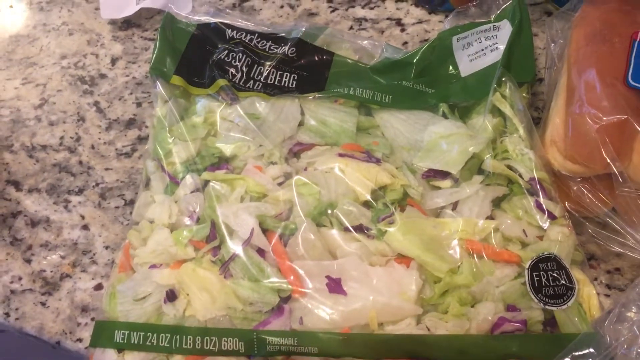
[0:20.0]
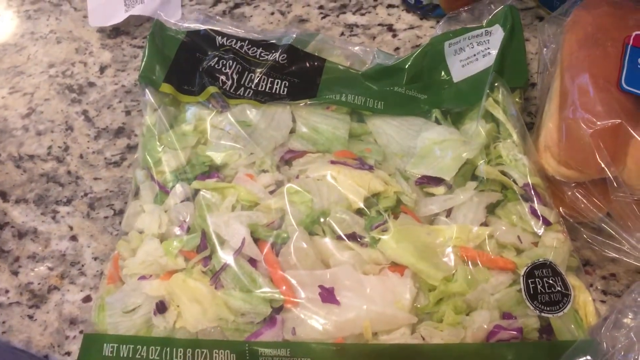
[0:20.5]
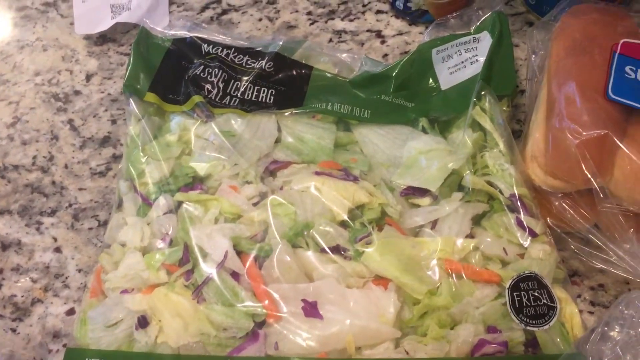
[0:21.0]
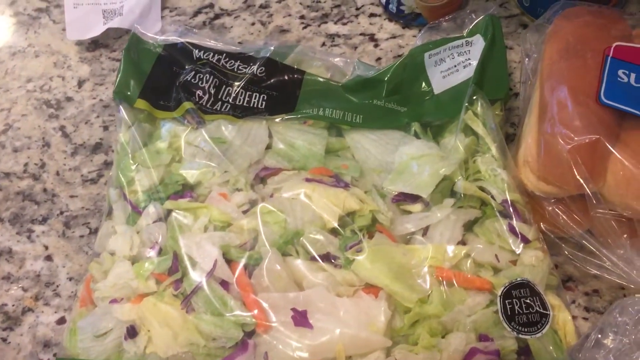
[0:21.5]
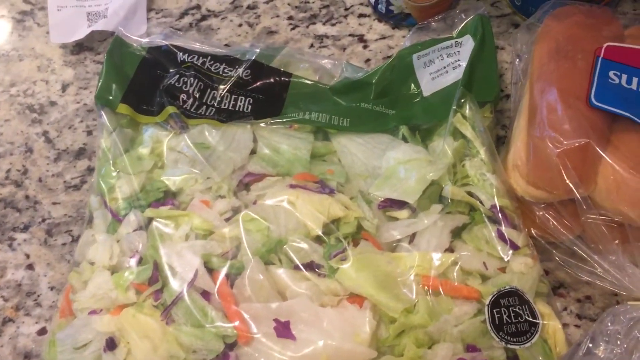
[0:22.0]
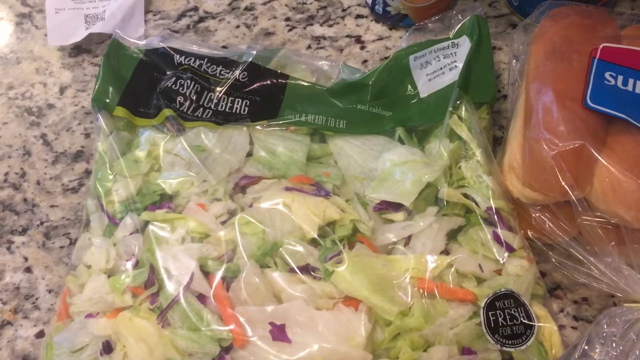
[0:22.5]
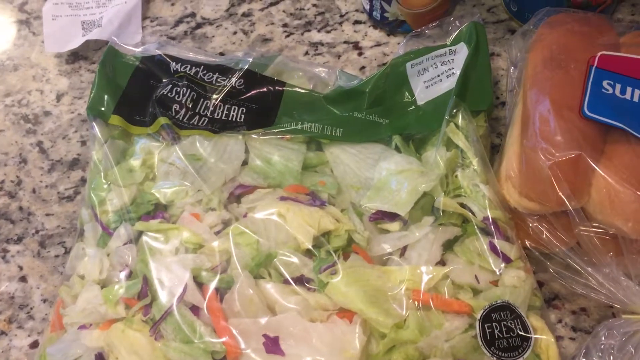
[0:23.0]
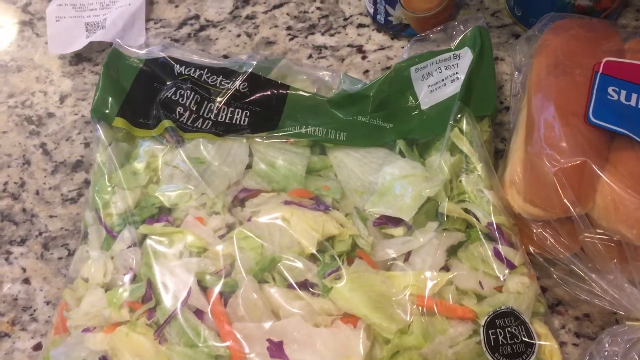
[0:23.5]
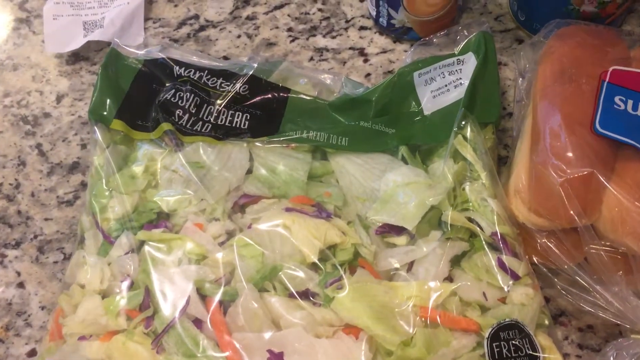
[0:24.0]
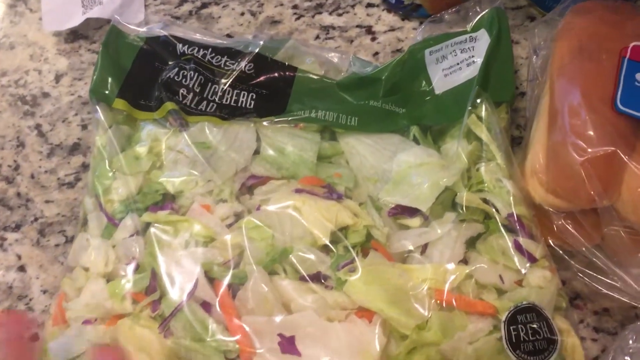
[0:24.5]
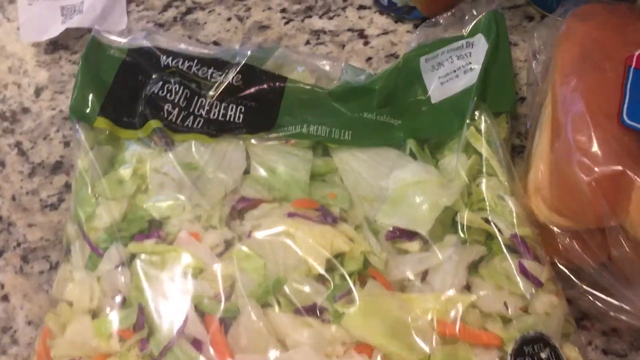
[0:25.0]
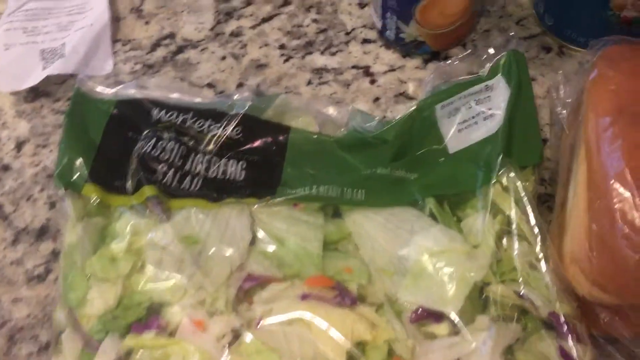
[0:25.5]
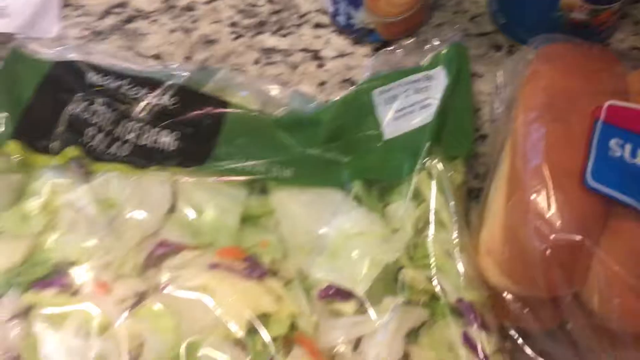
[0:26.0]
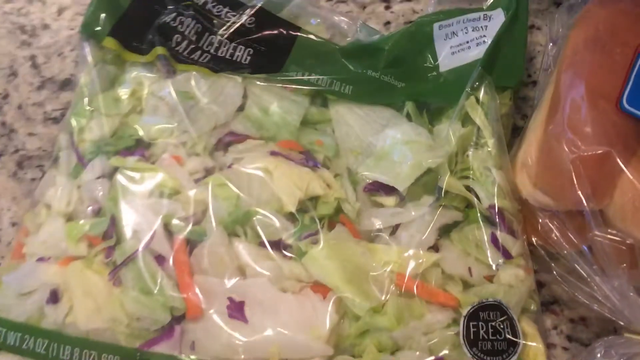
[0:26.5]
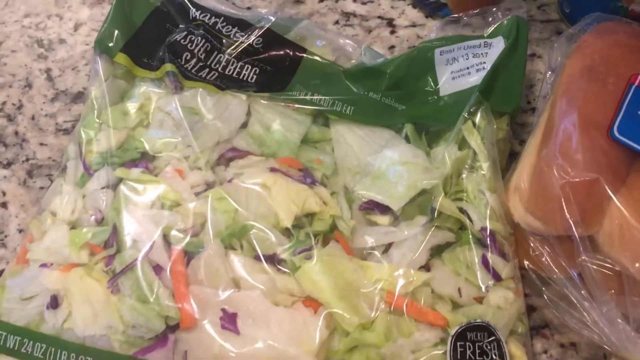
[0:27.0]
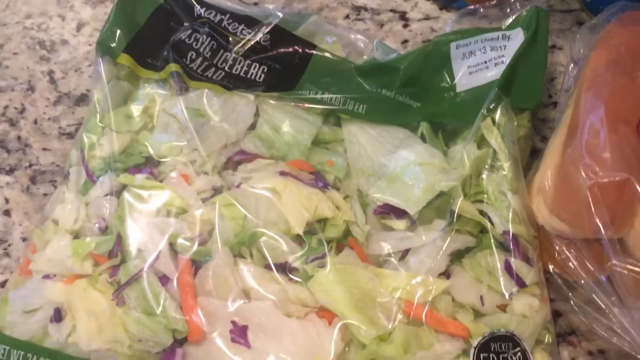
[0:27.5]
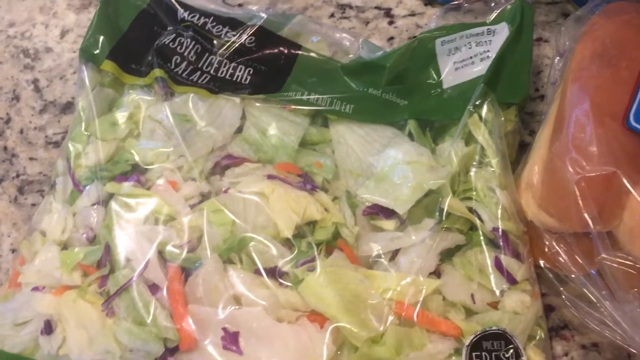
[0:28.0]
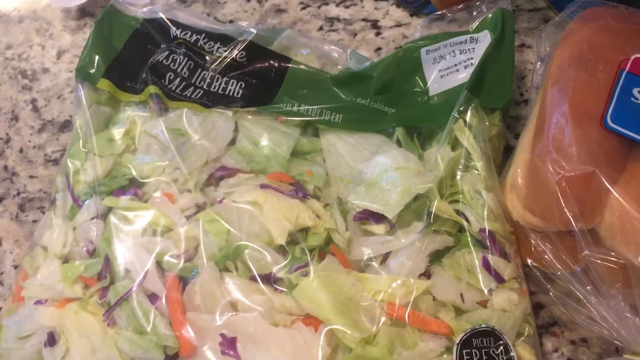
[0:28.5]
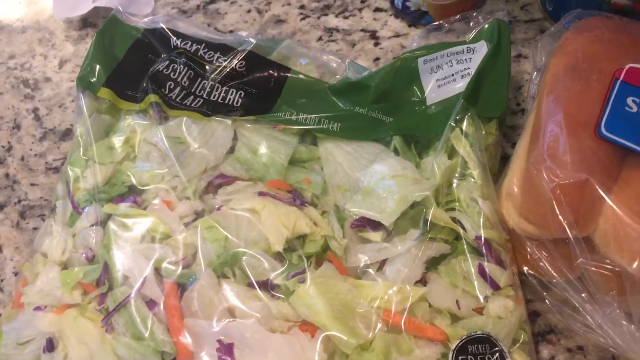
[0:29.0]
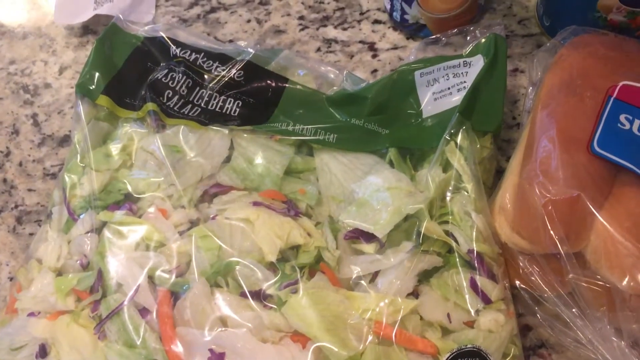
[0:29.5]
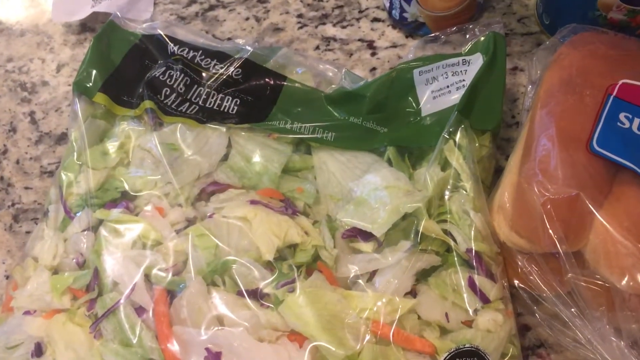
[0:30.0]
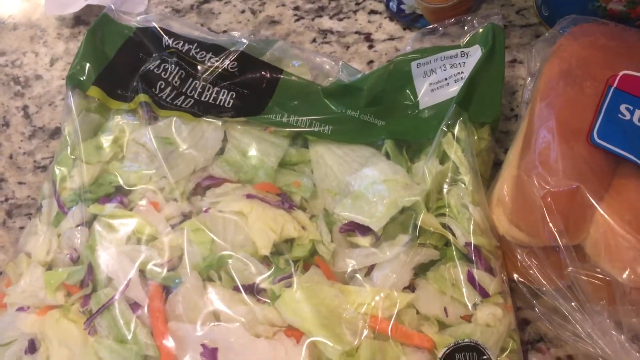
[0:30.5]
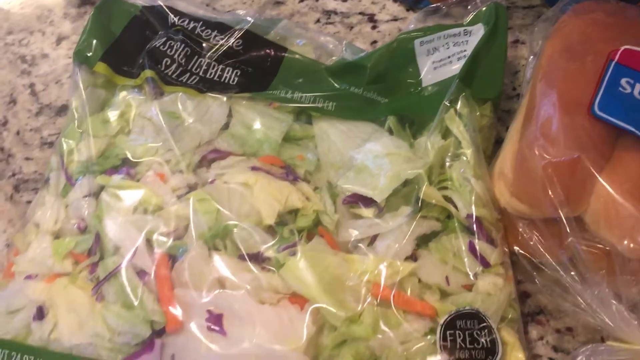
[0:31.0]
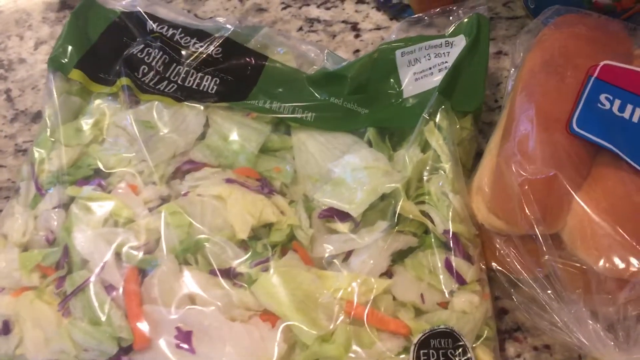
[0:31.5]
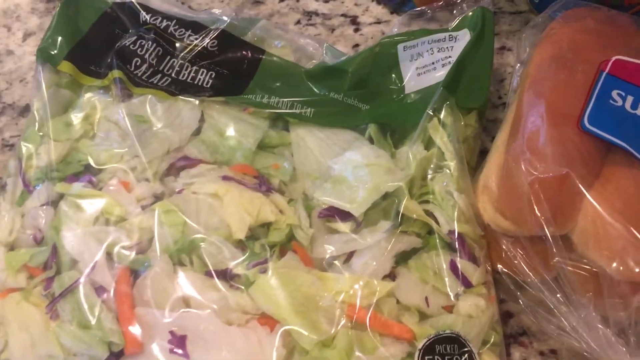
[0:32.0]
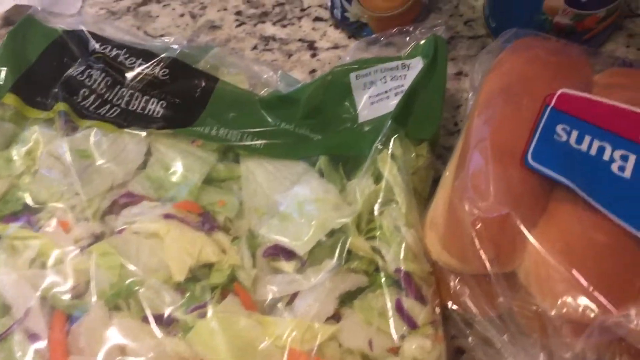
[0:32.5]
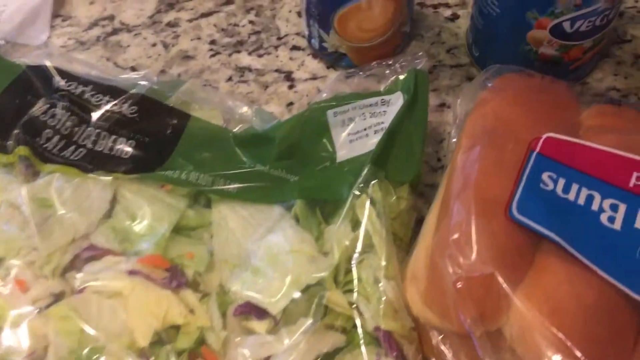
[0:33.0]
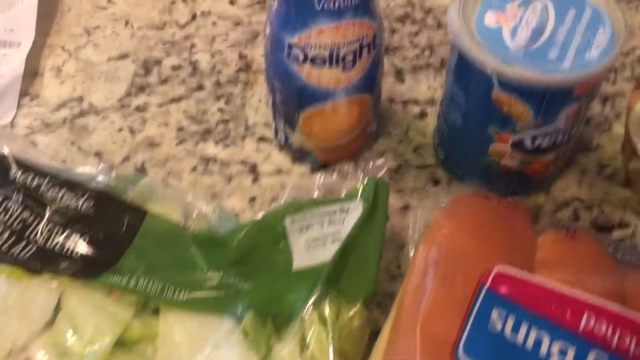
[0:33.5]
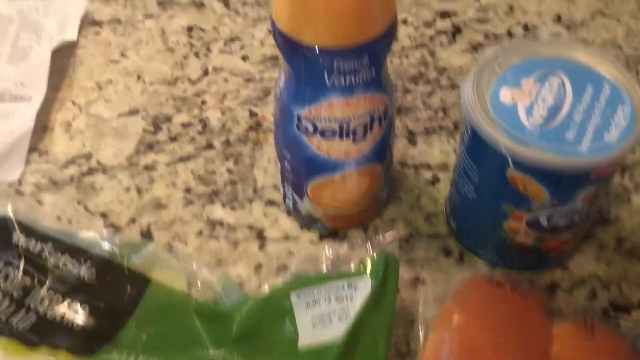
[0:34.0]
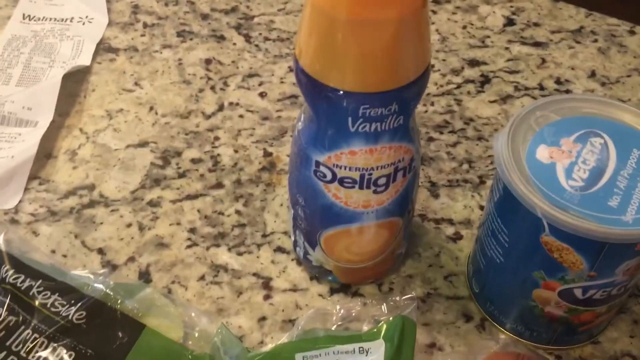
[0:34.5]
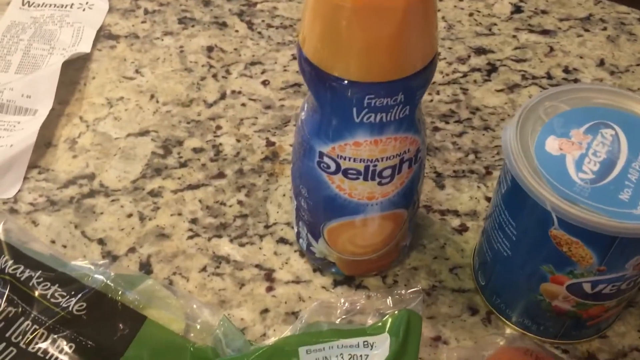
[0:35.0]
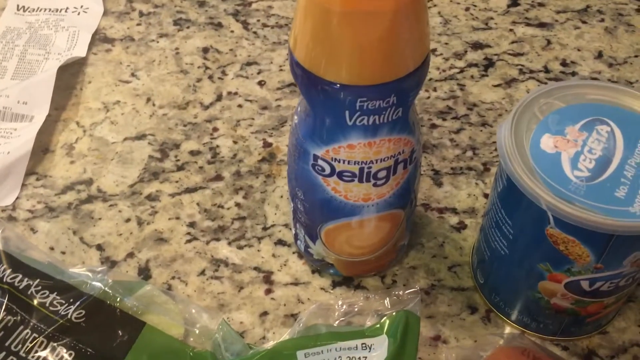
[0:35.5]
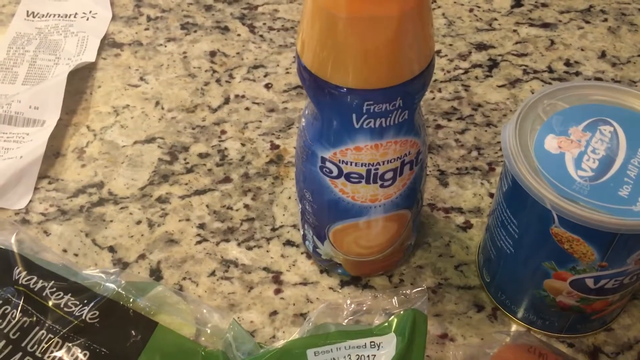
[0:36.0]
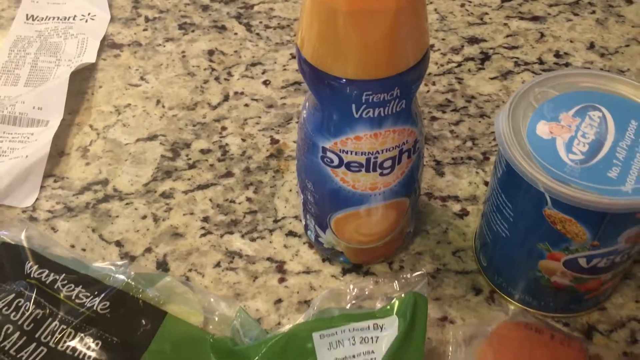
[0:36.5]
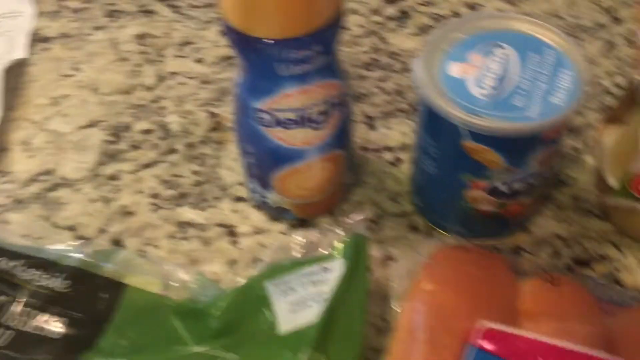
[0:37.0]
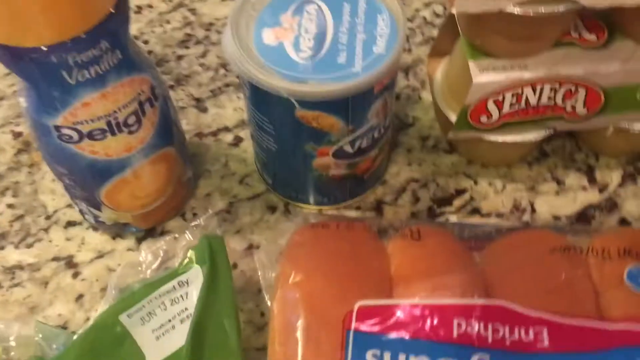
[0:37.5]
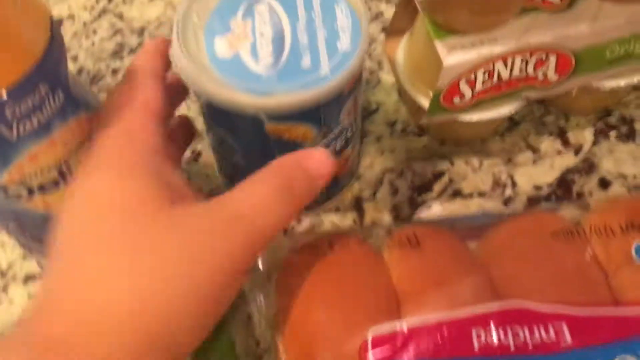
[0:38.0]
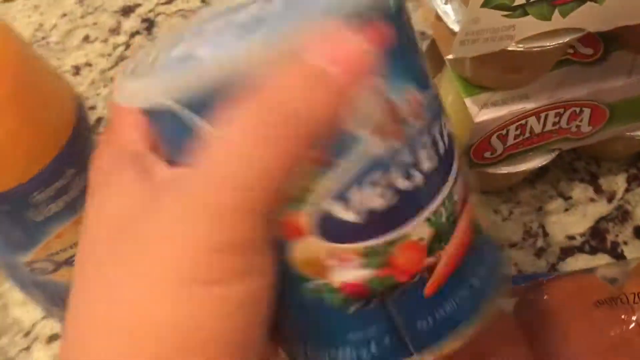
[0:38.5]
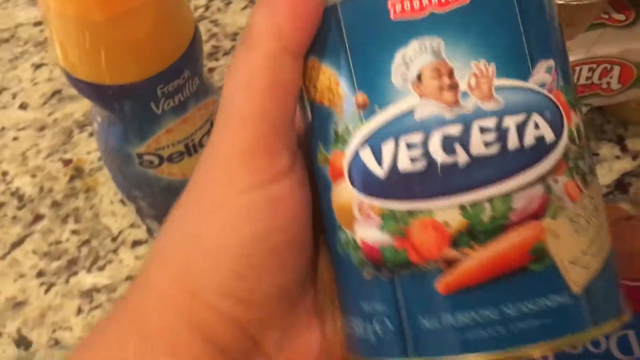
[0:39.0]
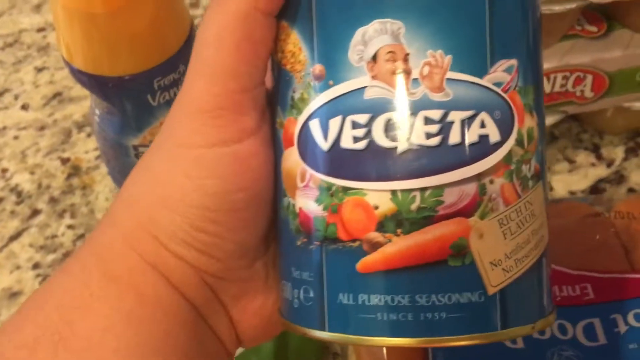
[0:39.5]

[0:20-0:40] What appears to be a grocery food haul from Walmart is set up on a kitchen countertop, which is marble with different patterns. A close-up shows a green transparent bag holding a classic iceberg salad, with lettuce, carrots and purple cabbage visible inside. A best-before date of June 13th, 2017 is shown. Next comes a blue and gold bottle of French vanilla with the brand name "delight" on it. On the left-hand side is the receipt for the items purchased from Walmart. The person filming picks up a can with a white and blue design; the front says "Vegeta", the can has pictures of various vegetables, and at the bottom it says "all-purpose seasoning".